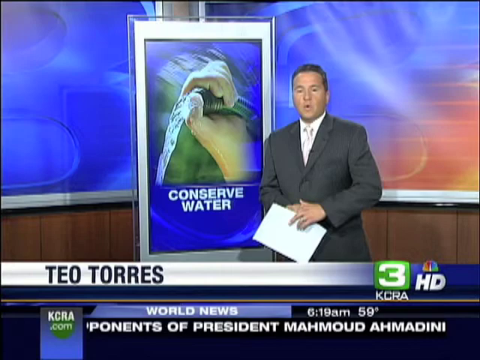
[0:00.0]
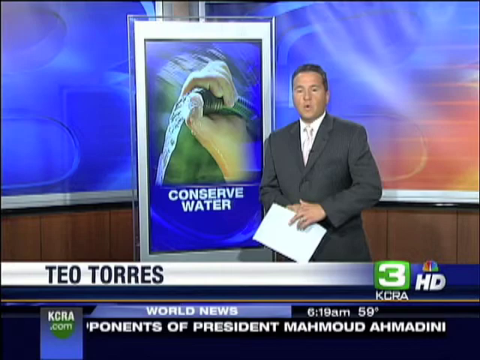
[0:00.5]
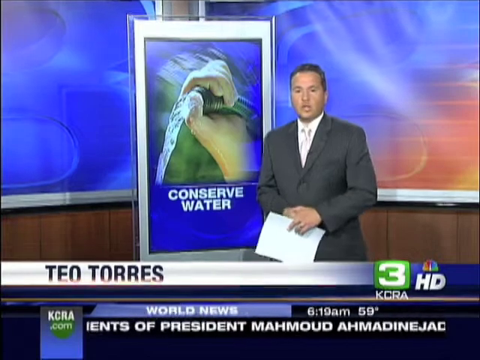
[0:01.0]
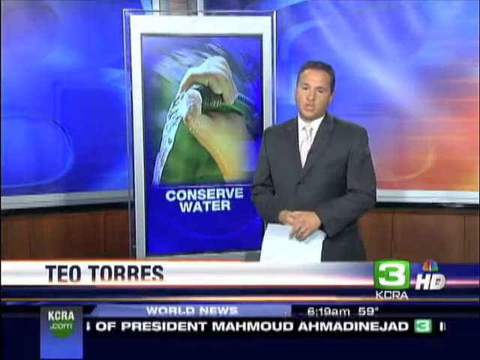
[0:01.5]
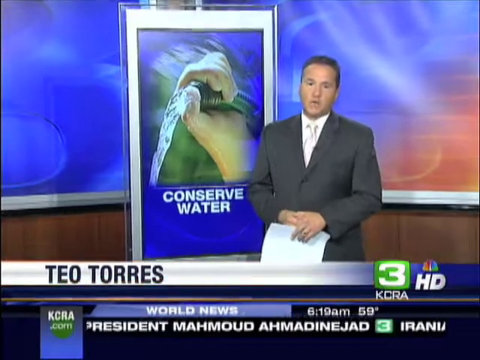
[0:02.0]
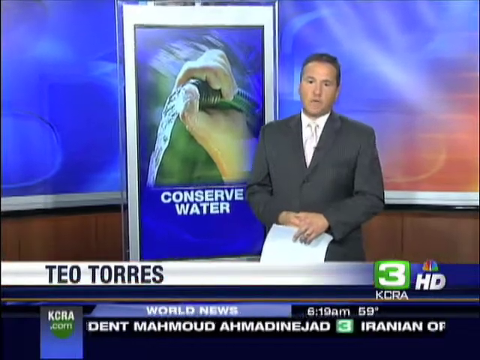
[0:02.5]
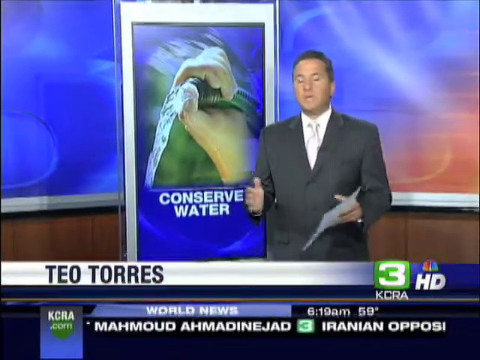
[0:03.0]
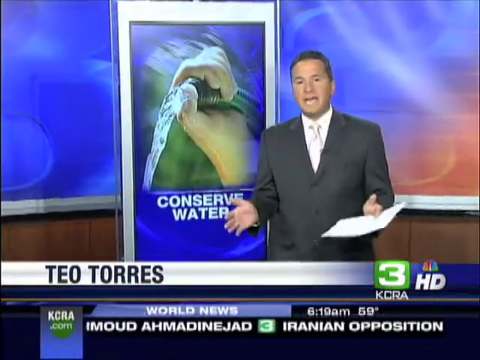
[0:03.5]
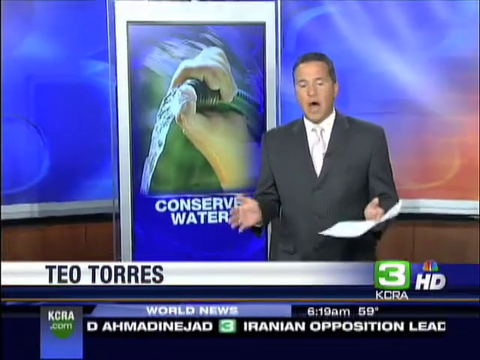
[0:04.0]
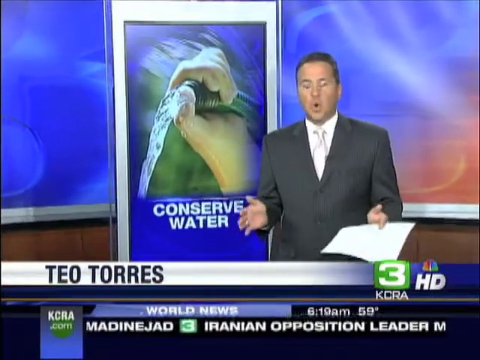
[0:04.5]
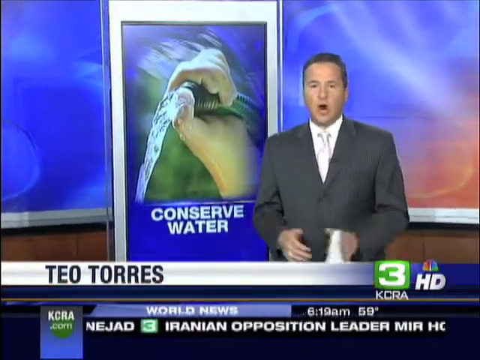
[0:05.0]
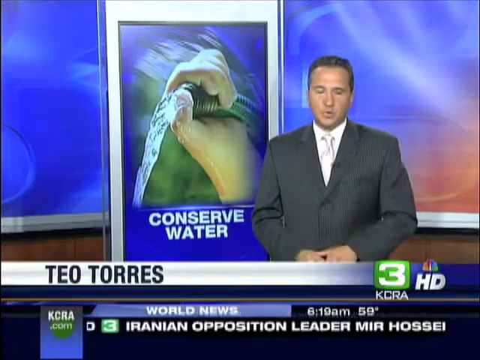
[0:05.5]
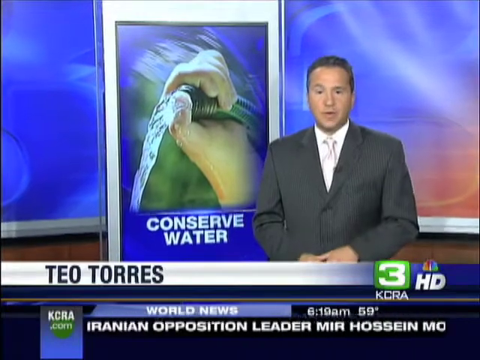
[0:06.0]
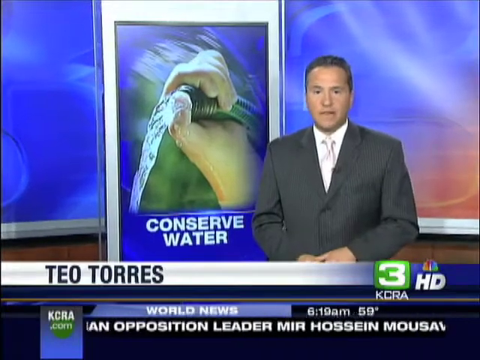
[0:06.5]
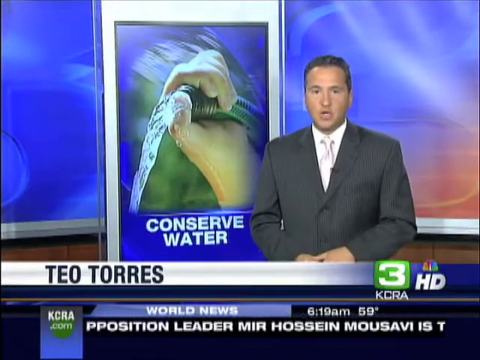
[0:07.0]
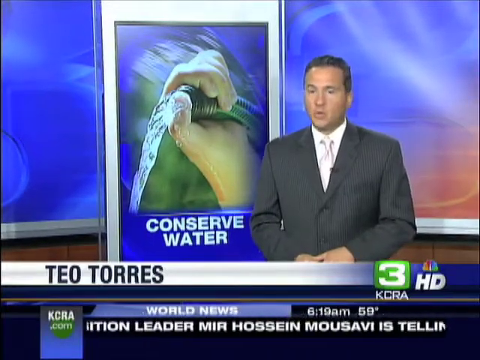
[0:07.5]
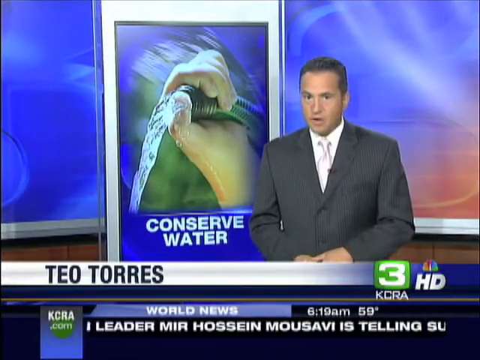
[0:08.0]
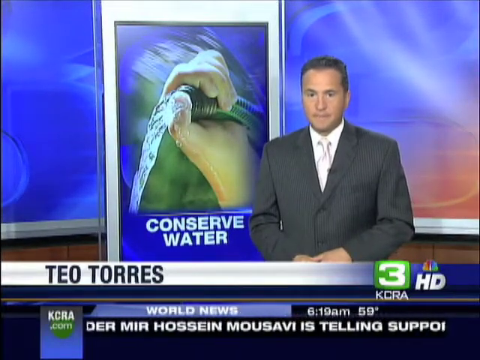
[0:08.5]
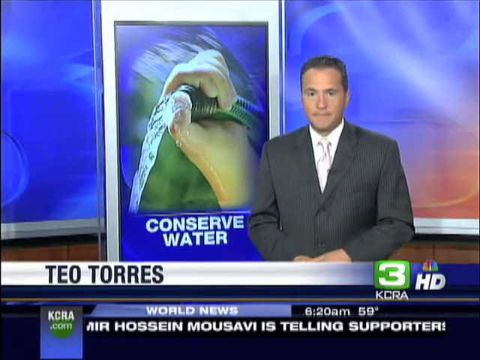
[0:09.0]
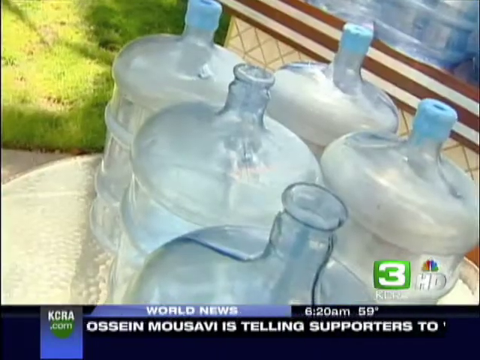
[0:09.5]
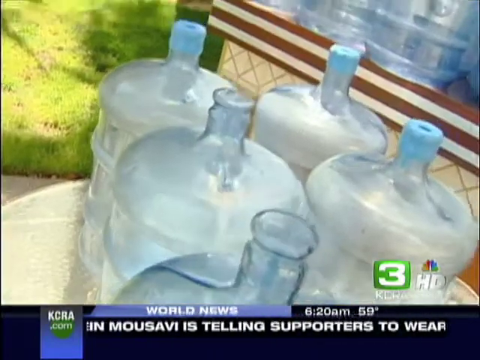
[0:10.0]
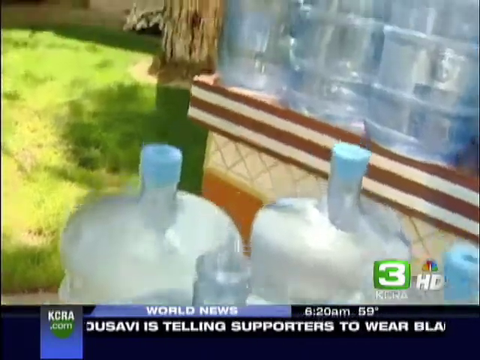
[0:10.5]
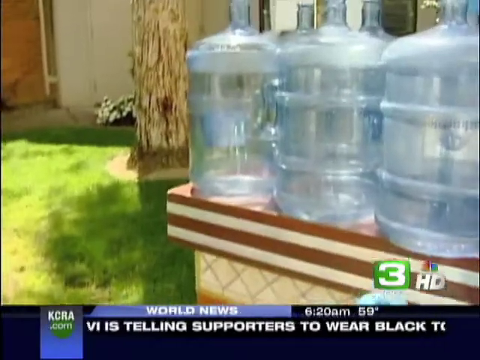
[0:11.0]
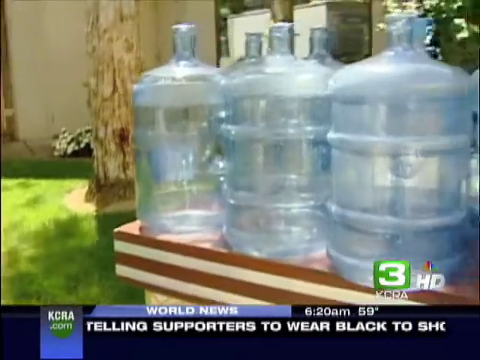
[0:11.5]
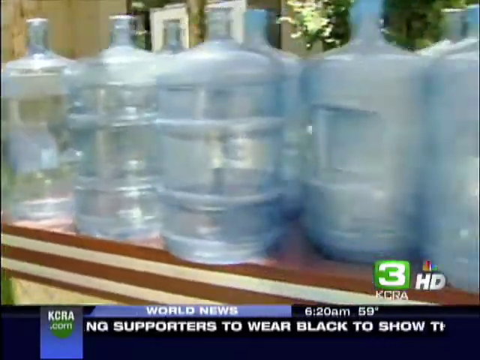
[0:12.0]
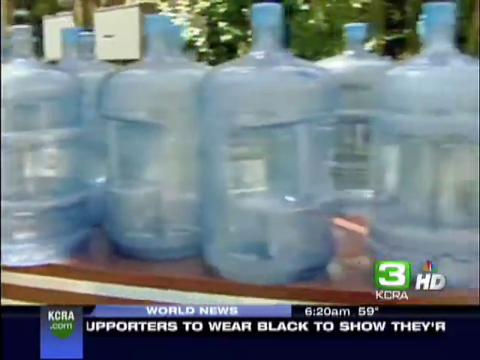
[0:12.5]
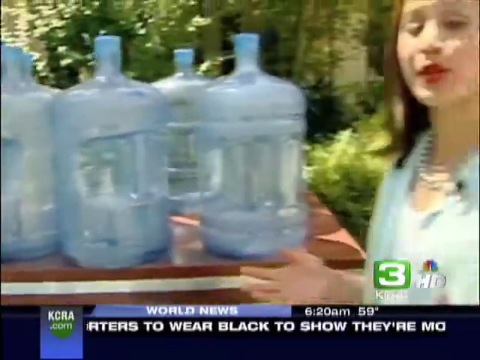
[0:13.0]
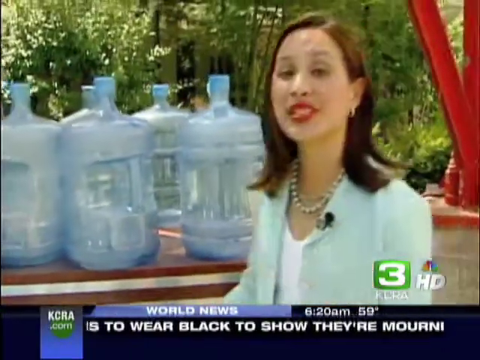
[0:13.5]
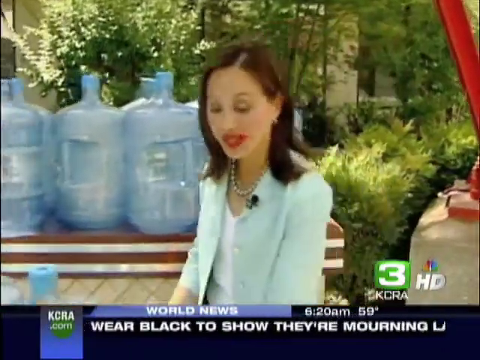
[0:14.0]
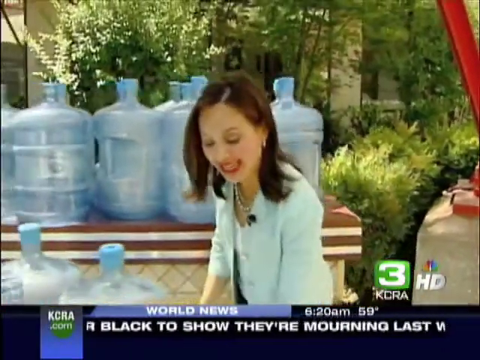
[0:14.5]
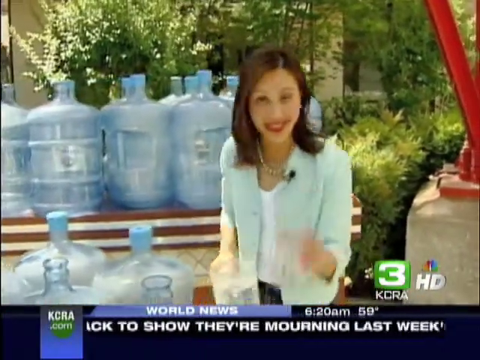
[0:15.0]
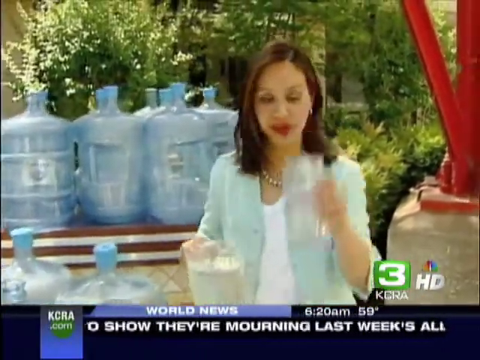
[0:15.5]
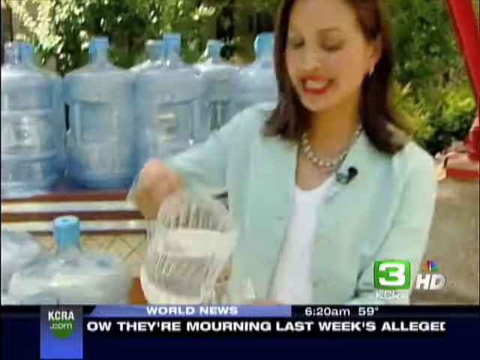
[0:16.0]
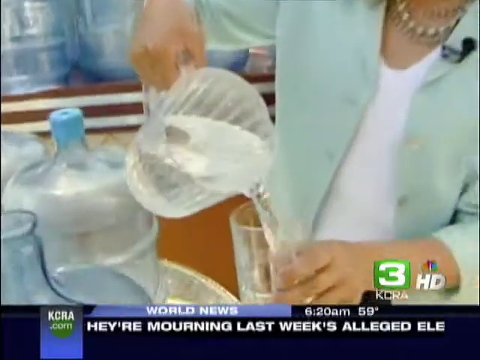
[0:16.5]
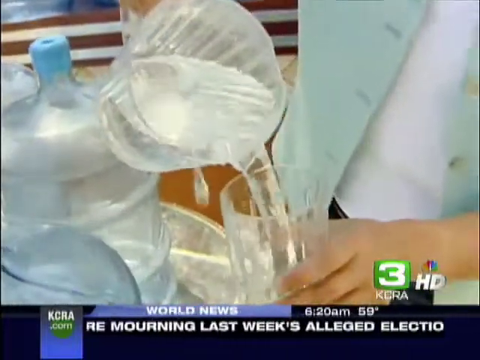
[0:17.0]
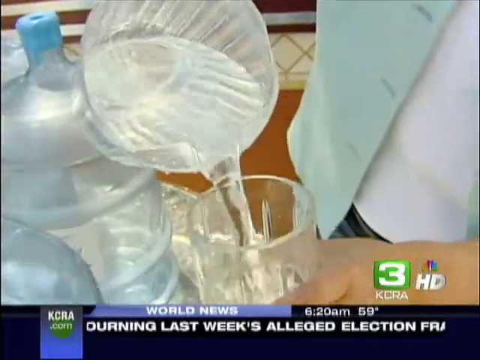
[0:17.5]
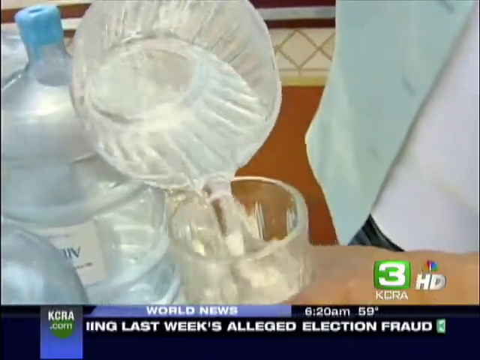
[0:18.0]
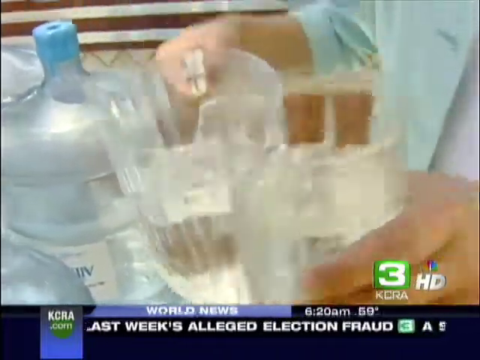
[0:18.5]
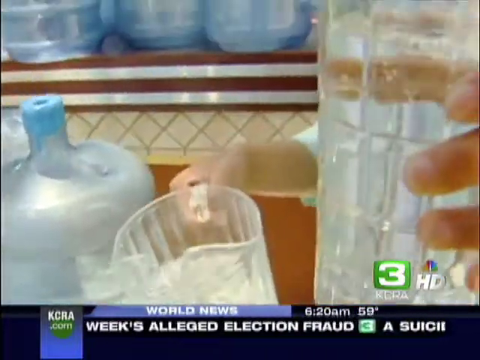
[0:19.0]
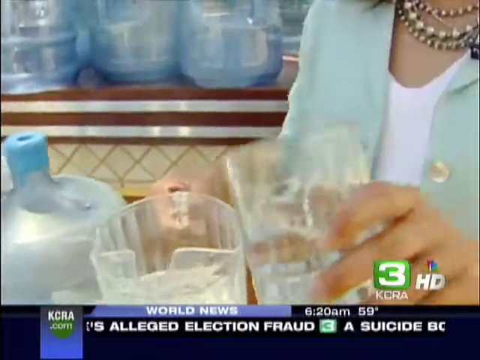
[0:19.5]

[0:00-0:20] A man stands in front of a screen that says "conserve water." His name is Teo Torres, and he appears to be on Channel 3 doing the world news at 6:19 a.m. He wears a dark gray suit and a white tie, has short dark hair, and holds a paper in his hand while looking straight into the camera, talking and gesturing a lot with his hands. Big, huge bottles of water are then shown, about ten of them. Next, a woman pours water into her glass while talking straight into the camera, explaining something. She wears a blue blouse with a white shirt underneath, has dark brown hair and wears lipstick.